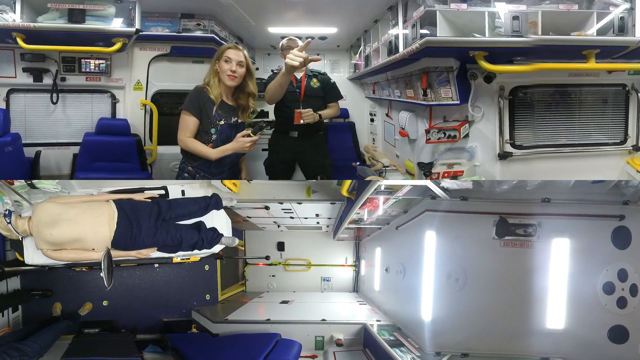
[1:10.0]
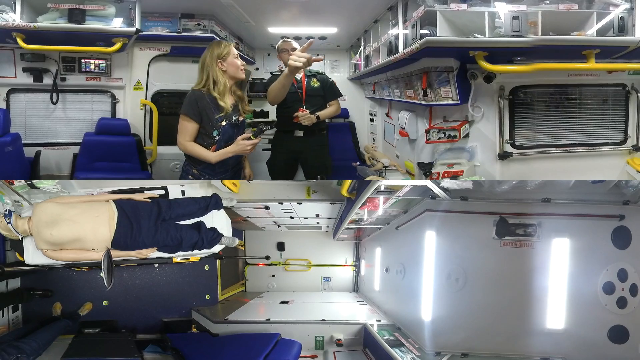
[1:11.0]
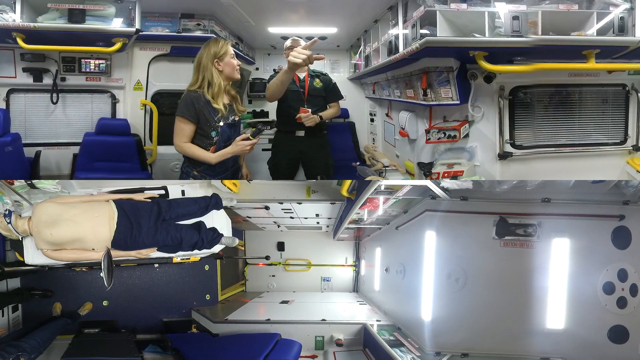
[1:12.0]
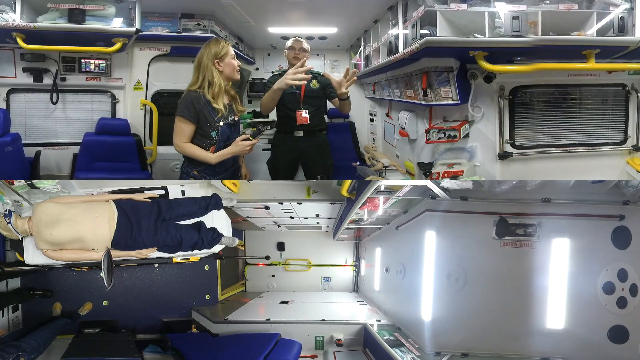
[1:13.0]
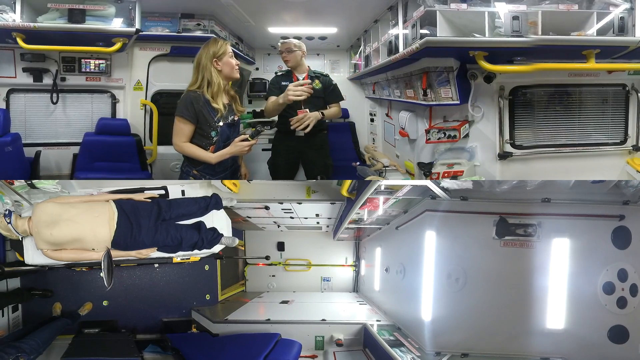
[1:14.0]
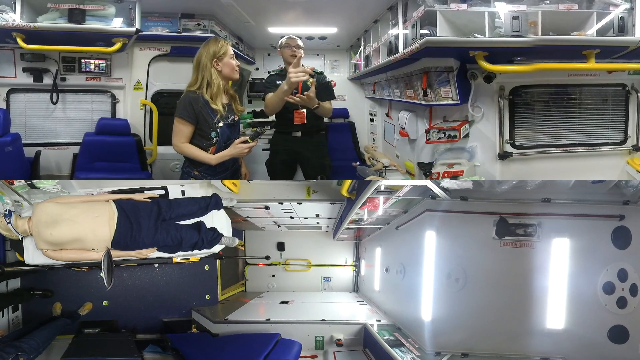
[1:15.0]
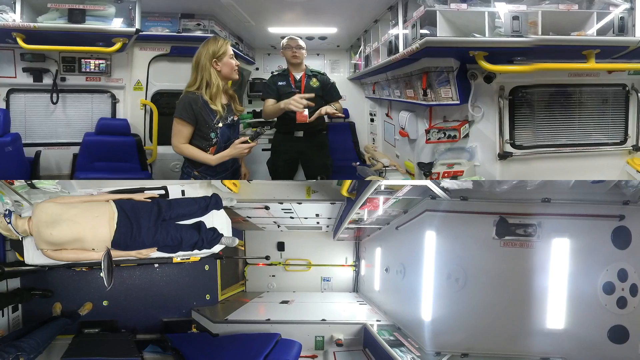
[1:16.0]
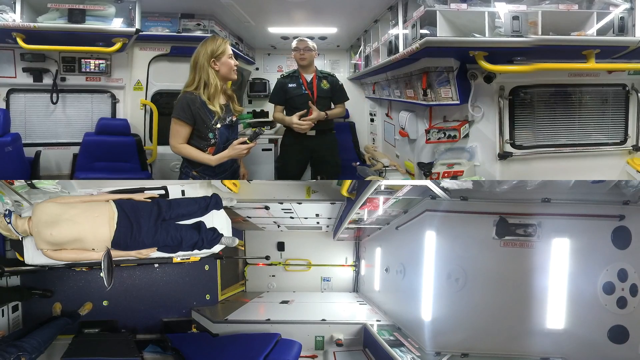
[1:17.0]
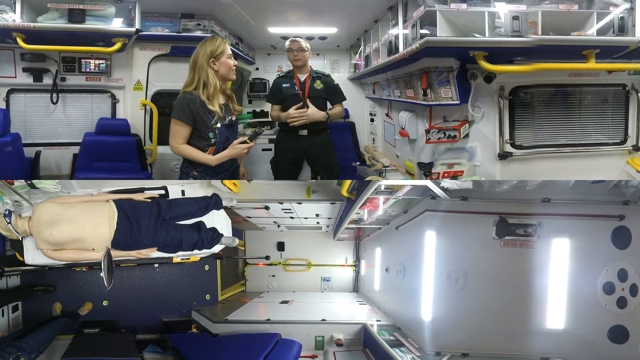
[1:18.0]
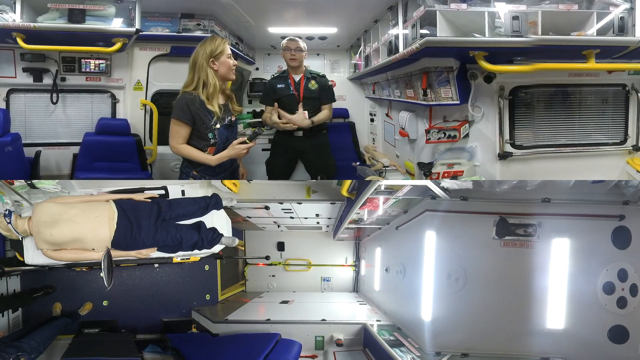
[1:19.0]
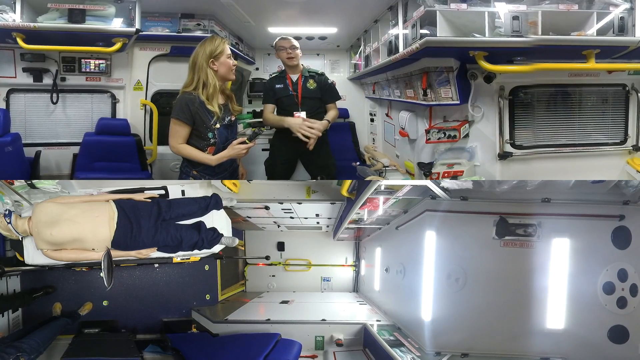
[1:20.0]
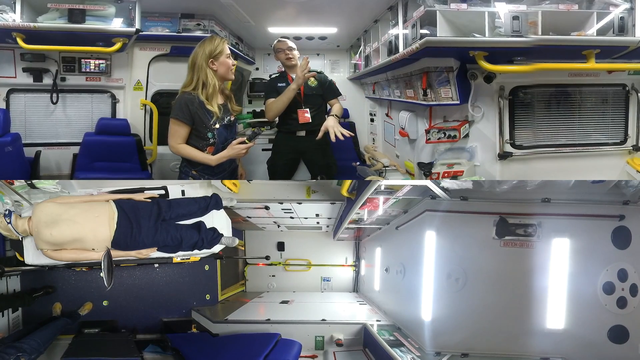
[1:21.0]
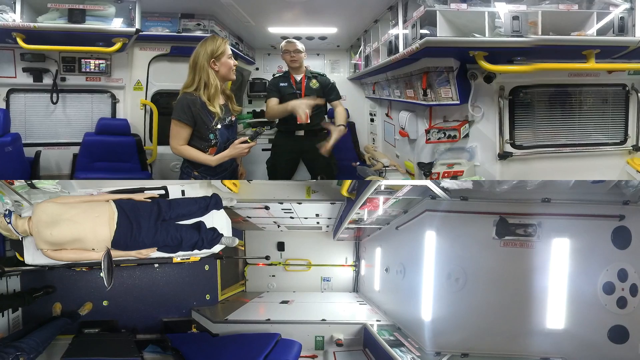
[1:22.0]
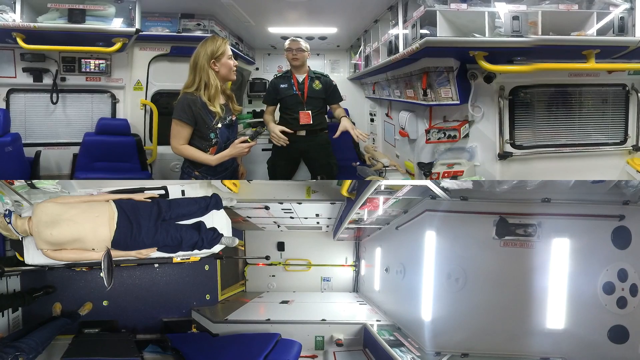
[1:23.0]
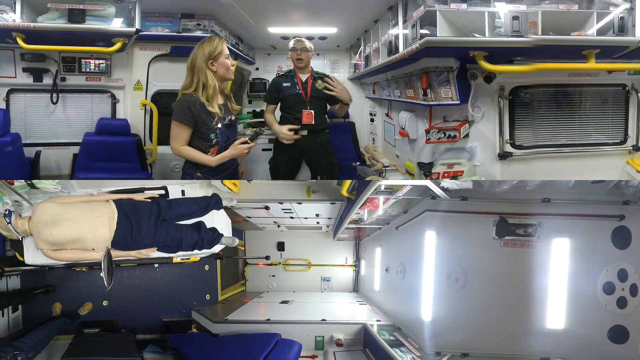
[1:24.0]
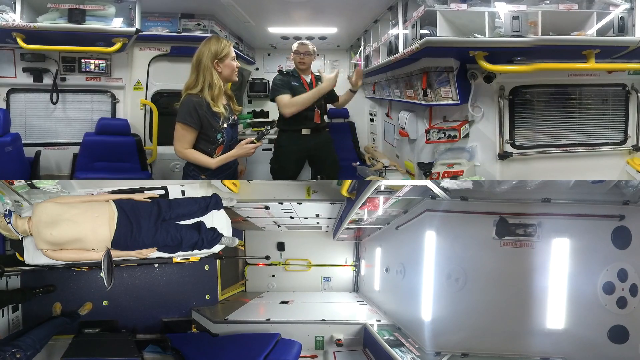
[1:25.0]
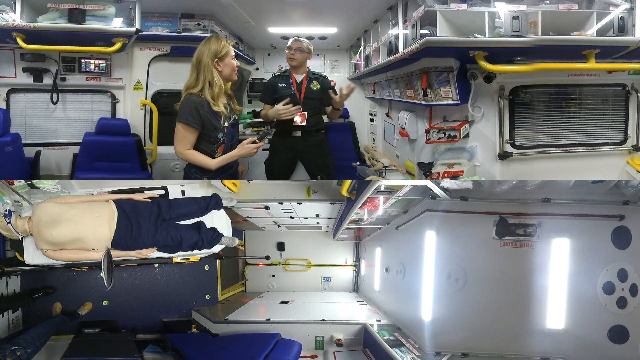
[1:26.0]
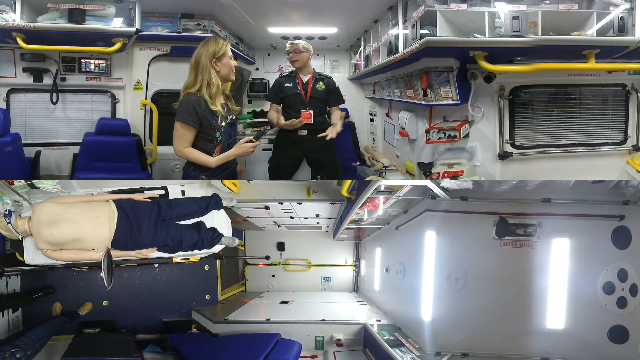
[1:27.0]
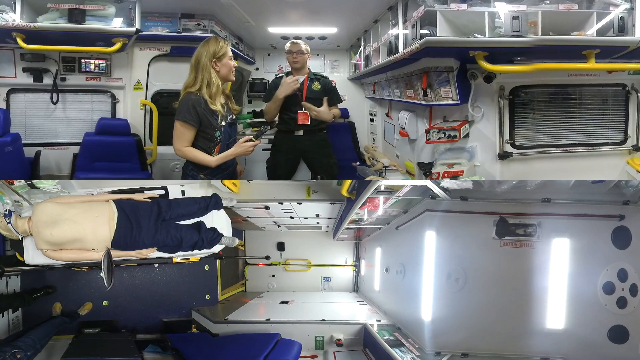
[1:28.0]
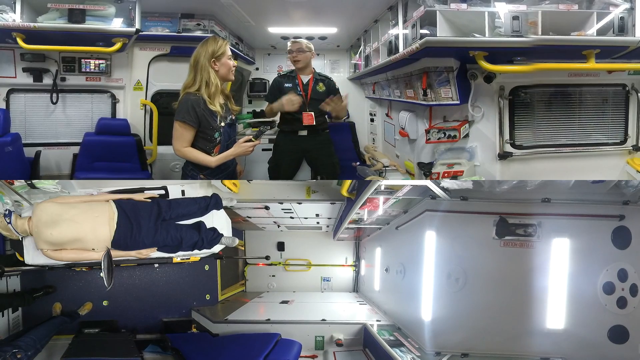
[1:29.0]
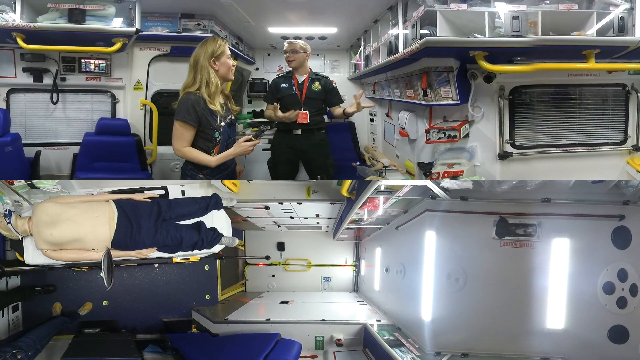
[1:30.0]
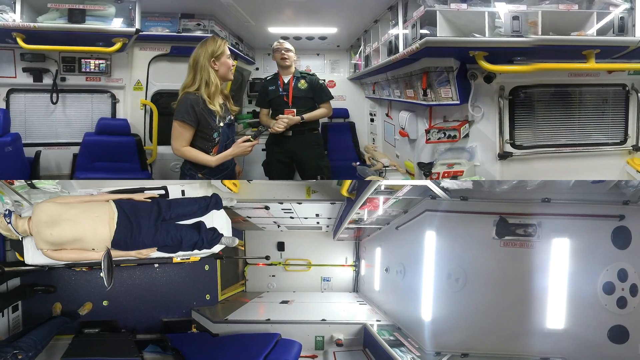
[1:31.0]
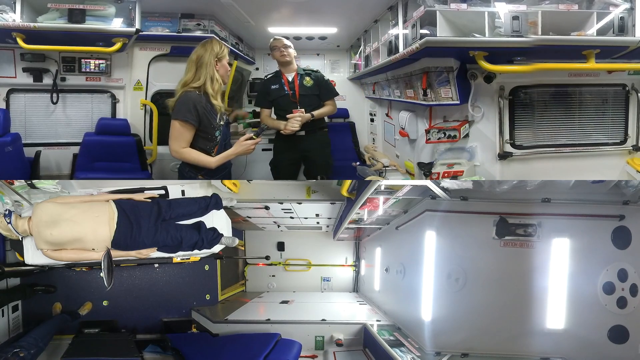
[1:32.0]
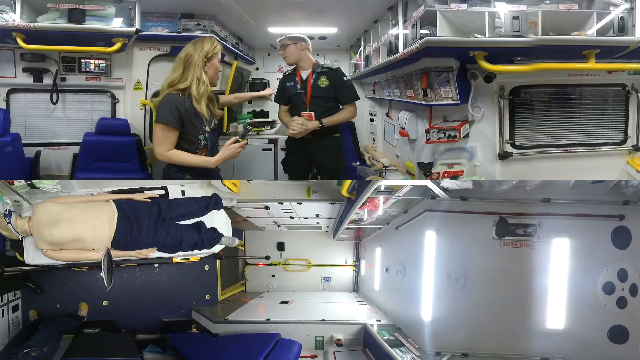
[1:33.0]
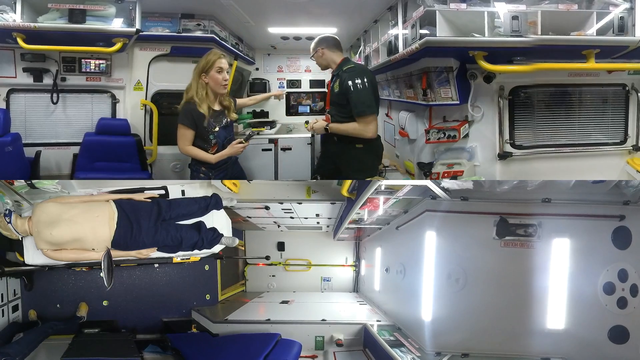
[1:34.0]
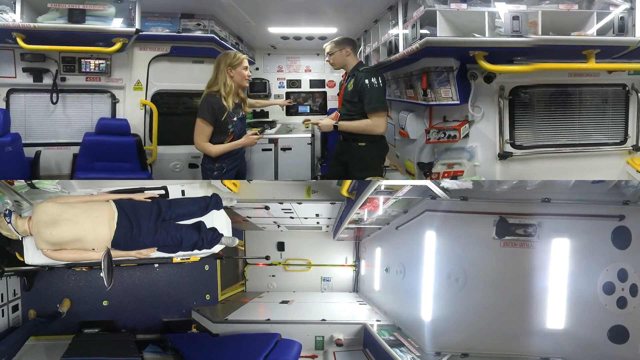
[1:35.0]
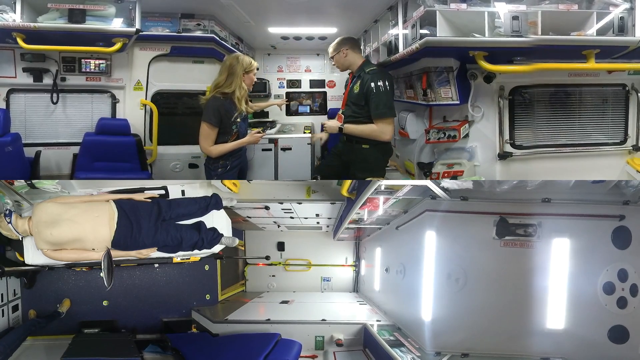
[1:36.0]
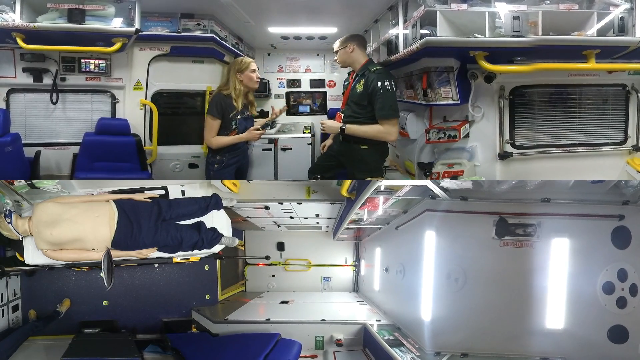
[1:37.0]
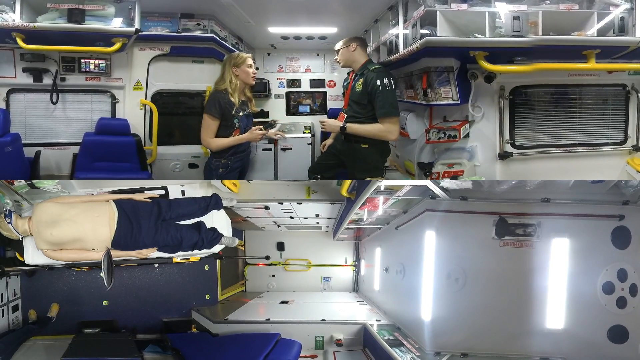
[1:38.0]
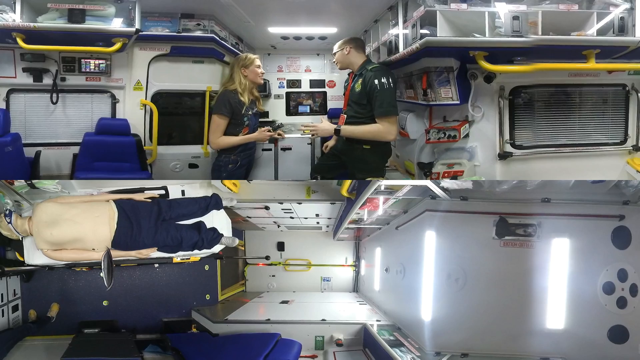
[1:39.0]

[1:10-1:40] The man is talking and using his hands quite a bit, while the woman mostly nods a little, listening. His hands begin to look strange as well: when he holds a hand in front of him and then moves it to the side, his hands look very large, almost unrealistic, at maybe two points. He does most of the talking. The bins, the structure and the dummy lying there all look the same. Then they seem to turn around to face something they had been blocking: a structure that looks like a cabinet but not quite, possibly some kind of monitor, with a small screen on the back of the structure. As they move slightly out of the way, the blue chair is also more visible.